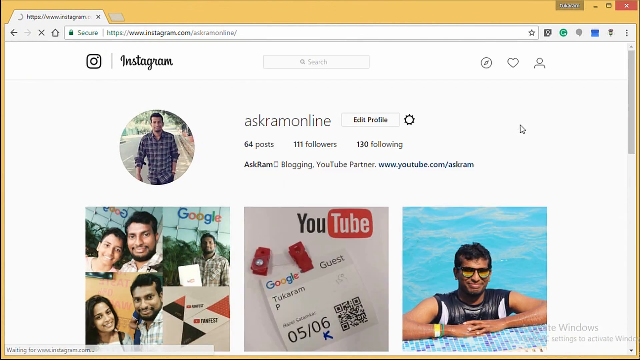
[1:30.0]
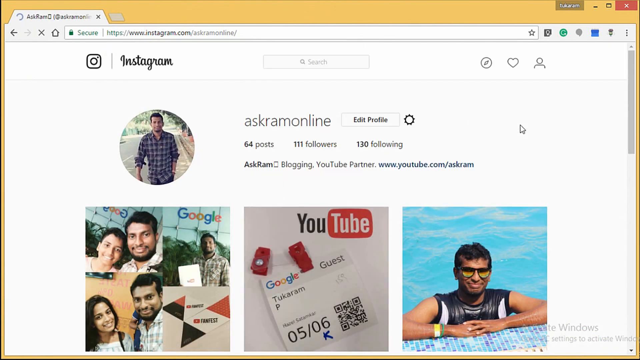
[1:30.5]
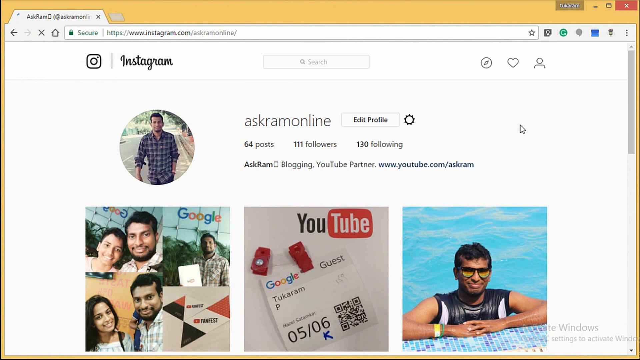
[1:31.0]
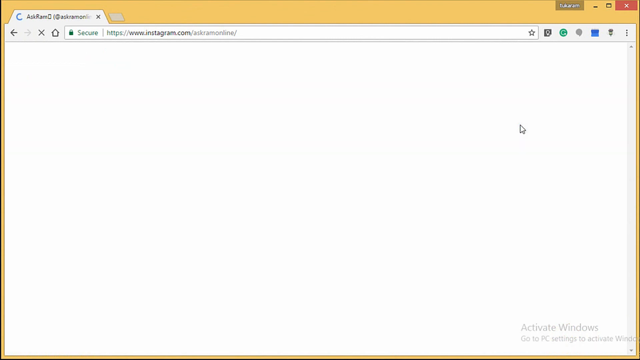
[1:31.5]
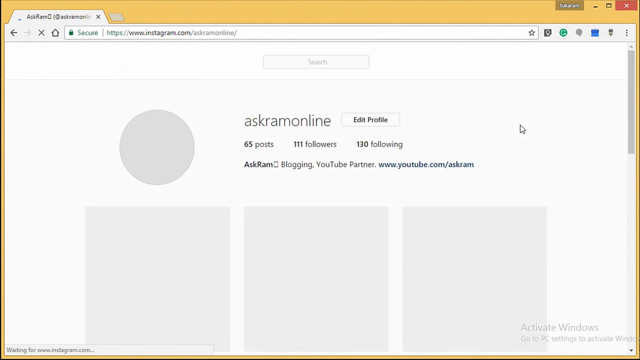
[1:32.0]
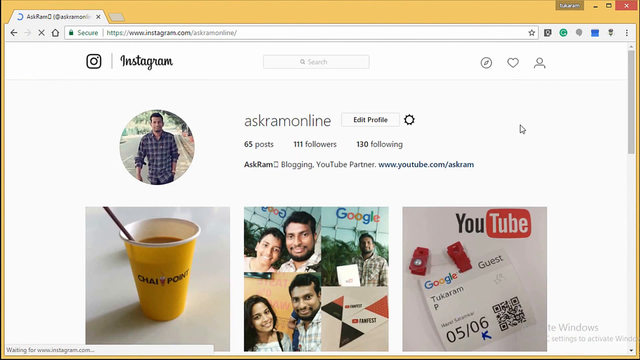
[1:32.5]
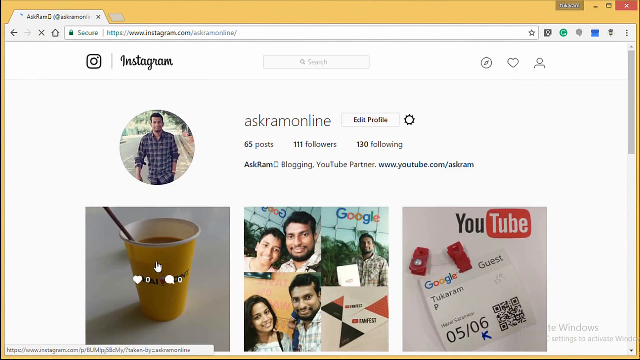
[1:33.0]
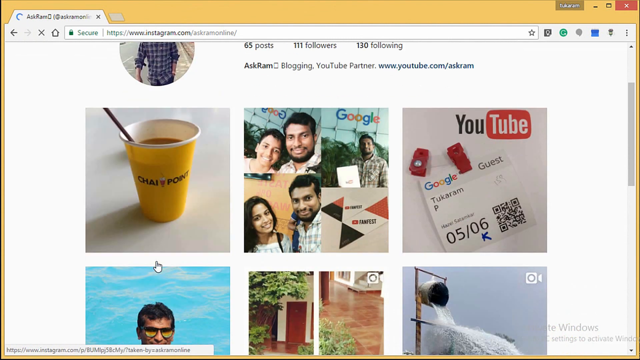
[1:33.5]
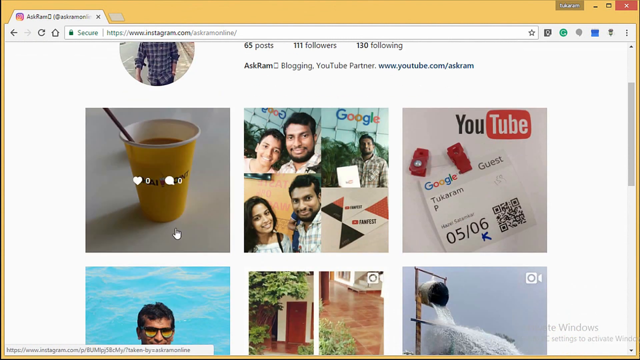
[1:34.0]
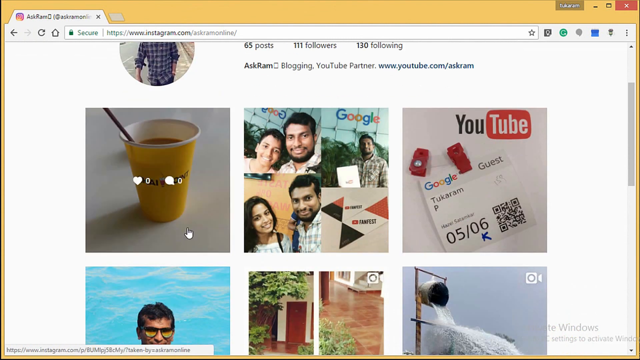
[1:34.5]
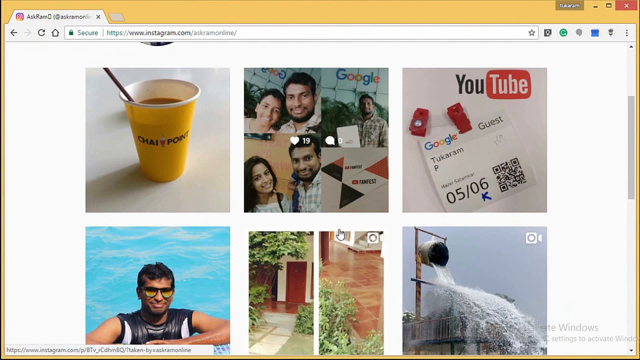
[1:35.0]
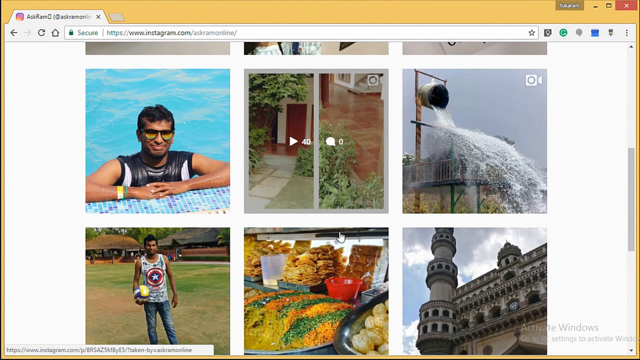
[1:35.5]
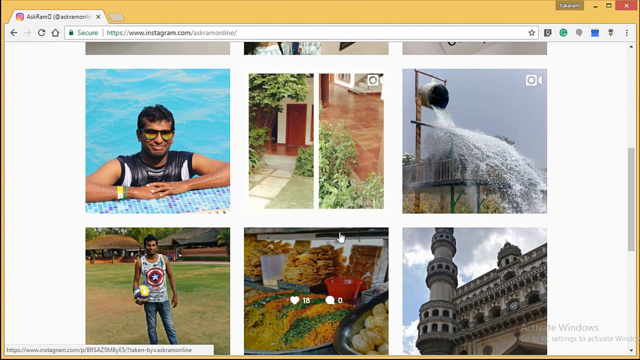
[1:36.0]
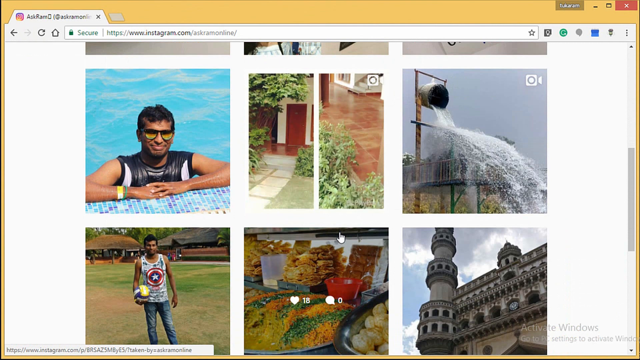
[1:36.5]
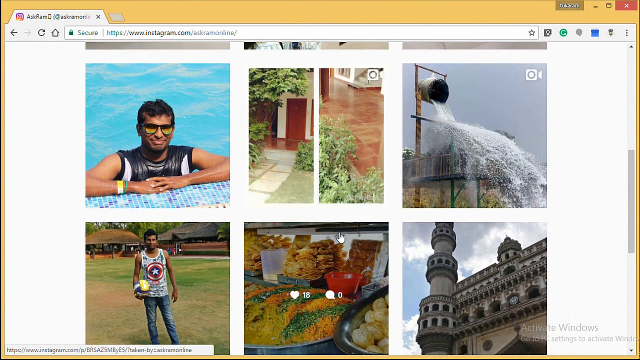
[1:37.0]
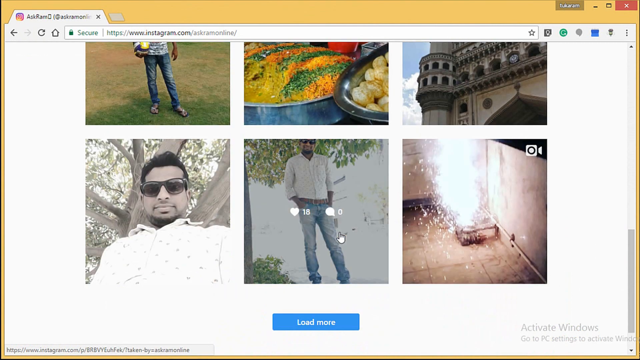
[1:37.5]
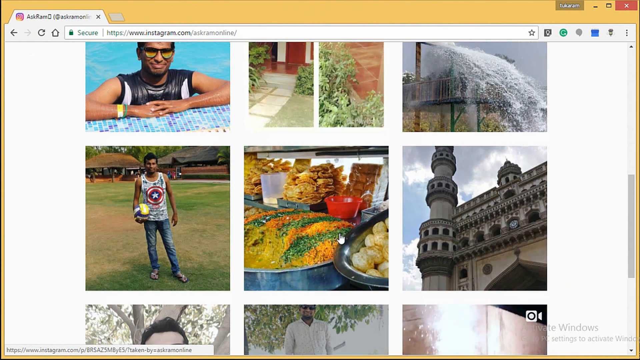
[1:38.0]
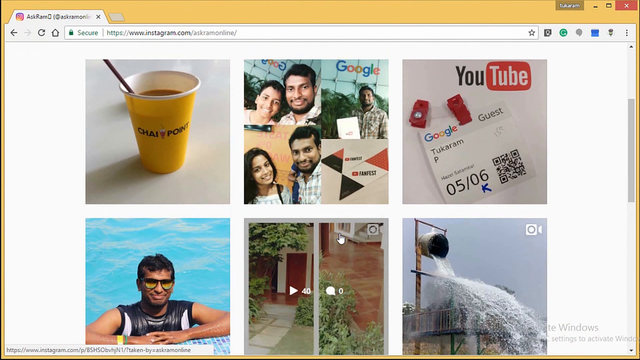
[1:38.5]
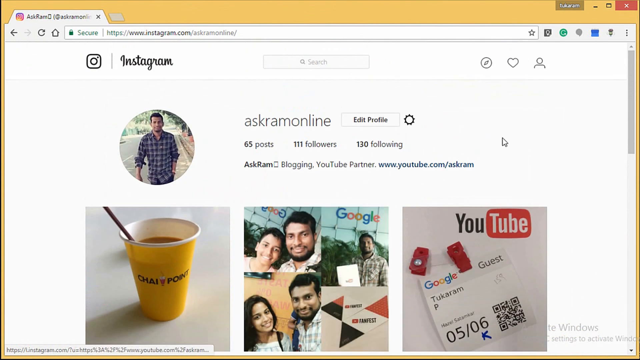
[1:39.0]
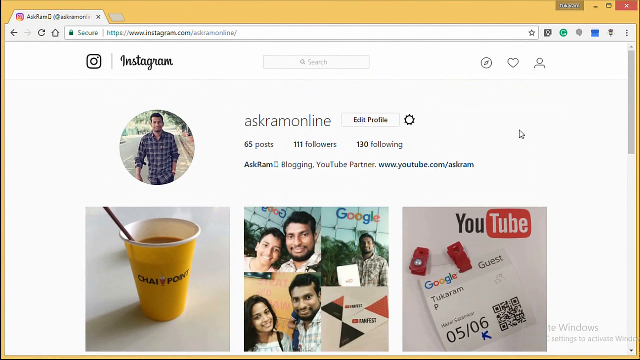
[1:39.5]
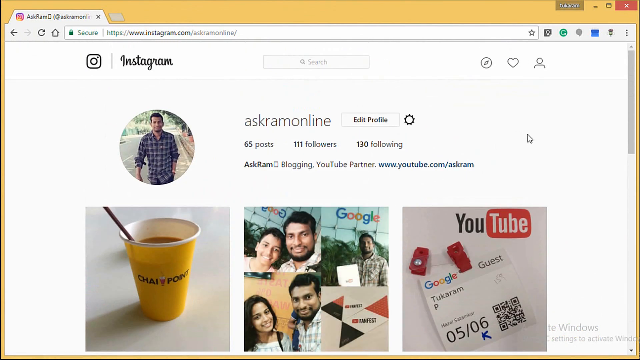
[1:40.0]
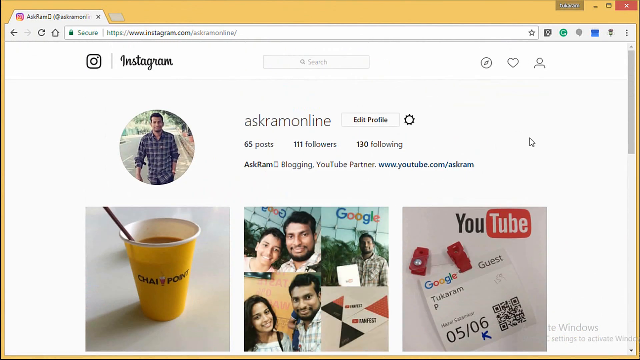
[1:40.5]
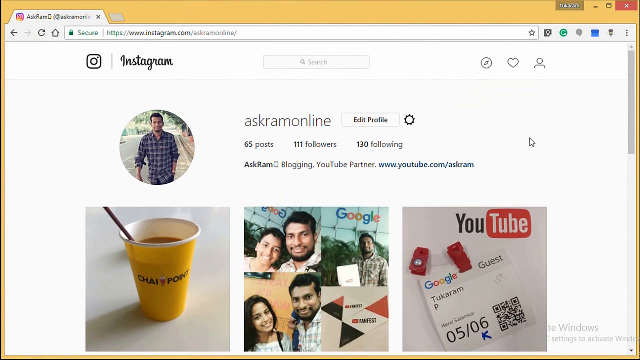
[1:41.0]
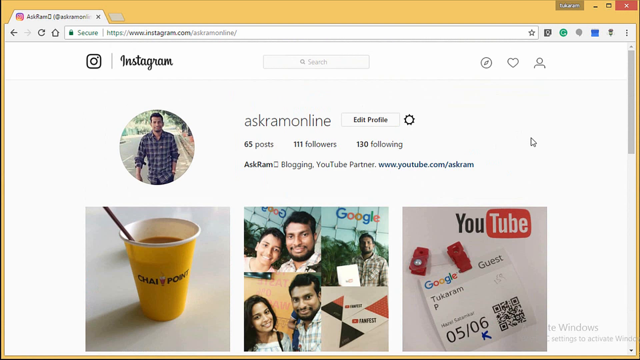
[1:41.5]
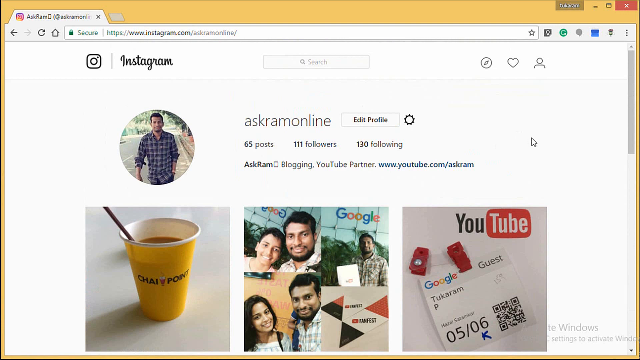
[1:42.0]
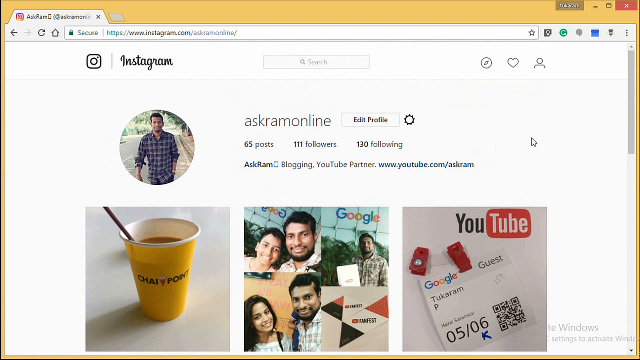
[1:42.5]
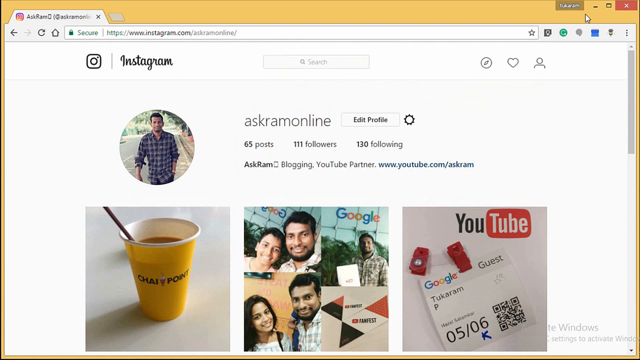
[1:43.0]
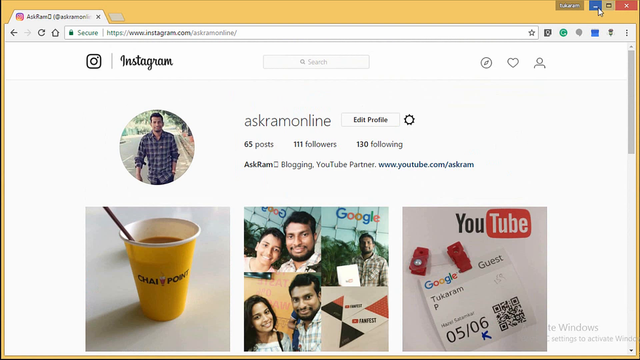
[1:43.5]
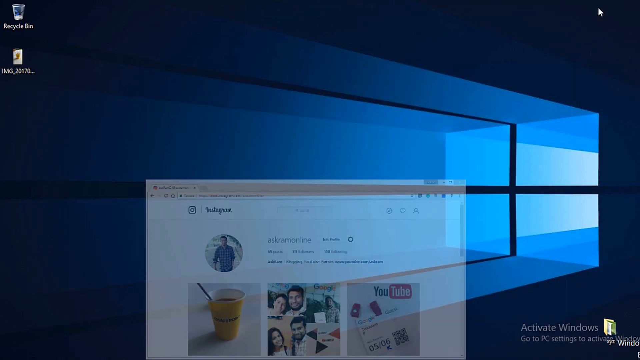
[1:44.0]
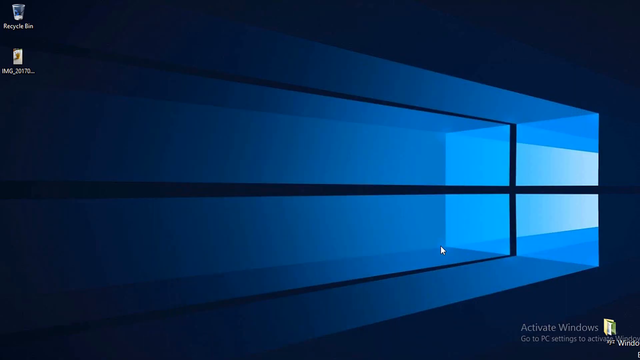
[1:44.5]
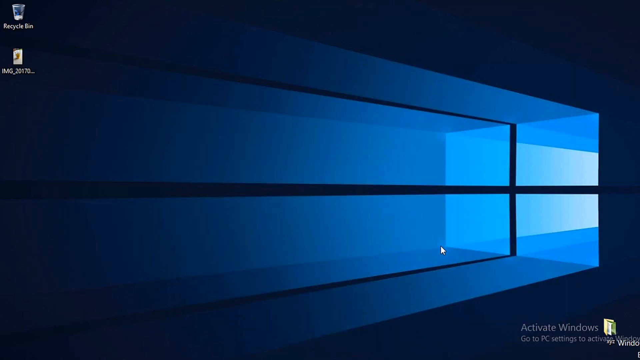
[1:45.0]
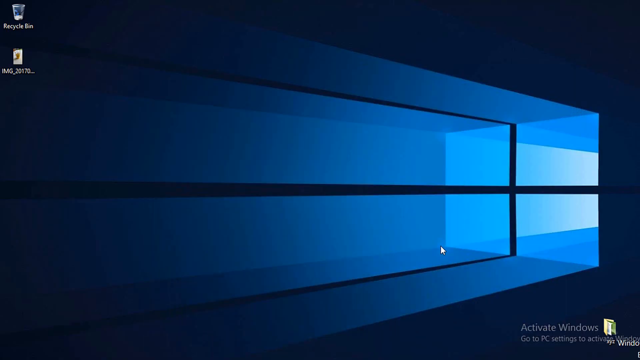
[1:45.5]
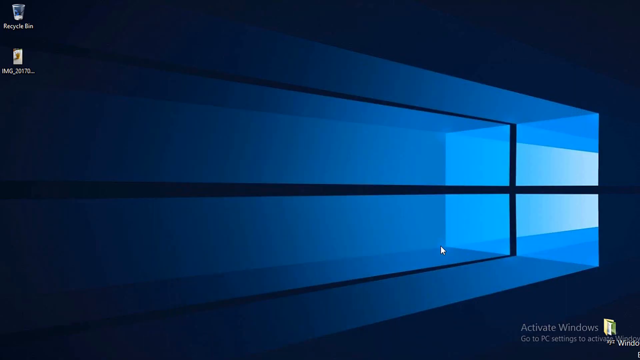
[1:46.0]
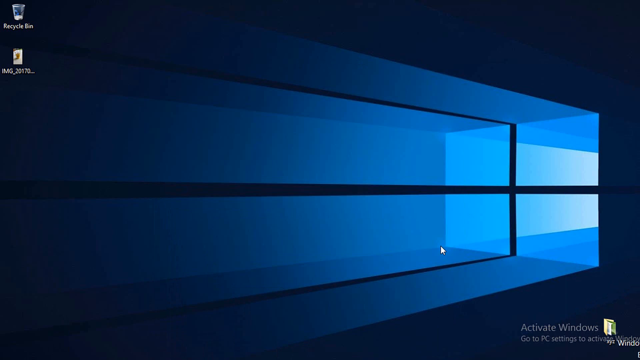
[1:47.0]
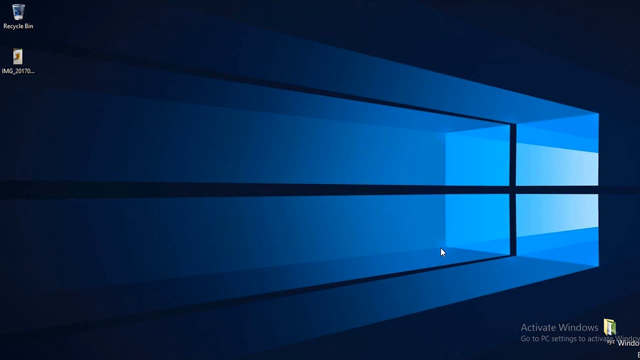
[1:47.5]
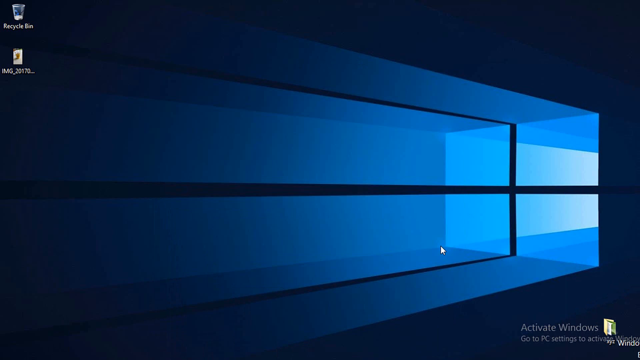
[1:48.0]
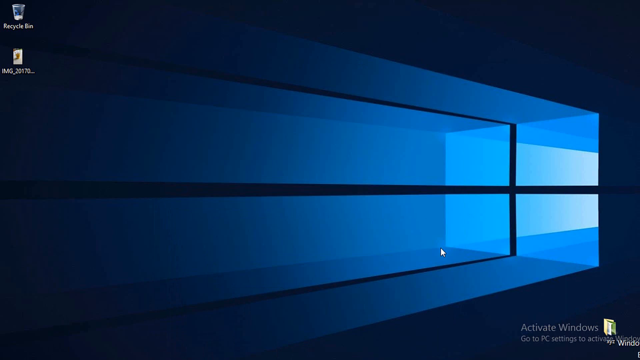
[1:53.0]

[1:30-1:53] He goes back to his profile and scrolls through all his posts. The profile shows a total of 65 posts, 111 followers and 130 following. His profile photo shows himself wearing a checked shirt and walking in a street. He scrolls down further, maybe having finished, and minimizes the screen, revealing his desktop. The desktop shows a 3D shape that looks like a building, containing many rectangles distinguished by different shades of blue: navy blue, sky blue, light blue and baby blue. There are only two icons on the desktop: the recycle bin and another one that looks like an image holder.